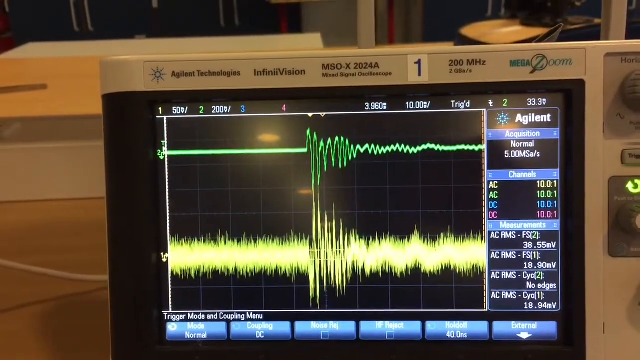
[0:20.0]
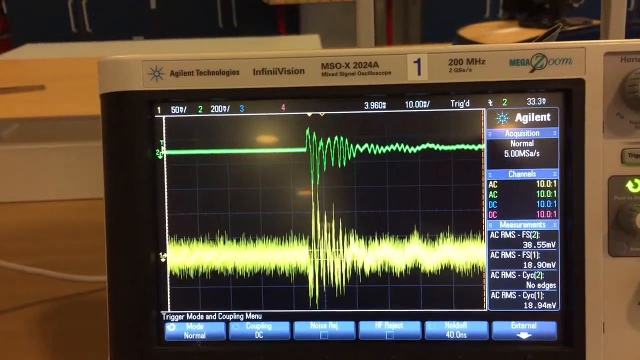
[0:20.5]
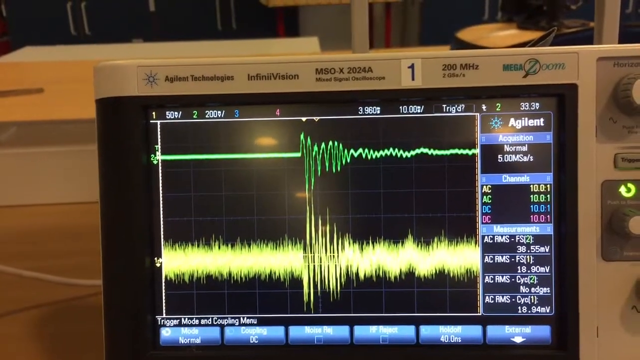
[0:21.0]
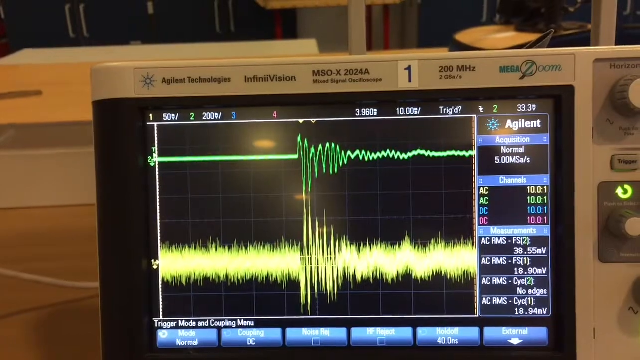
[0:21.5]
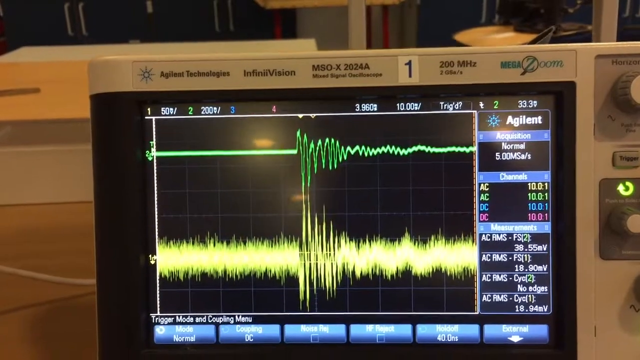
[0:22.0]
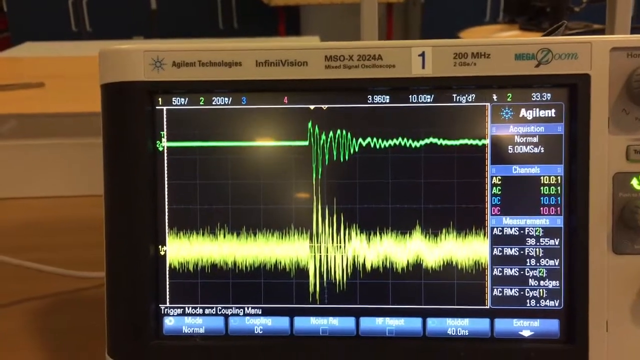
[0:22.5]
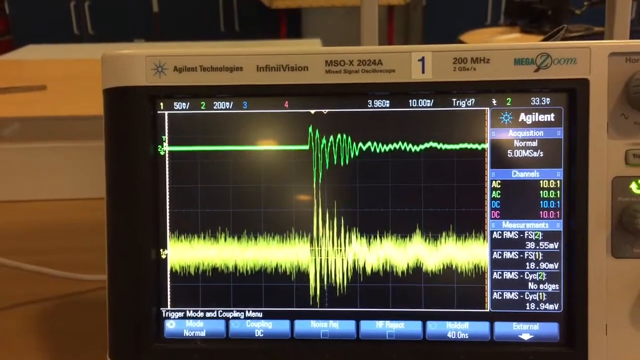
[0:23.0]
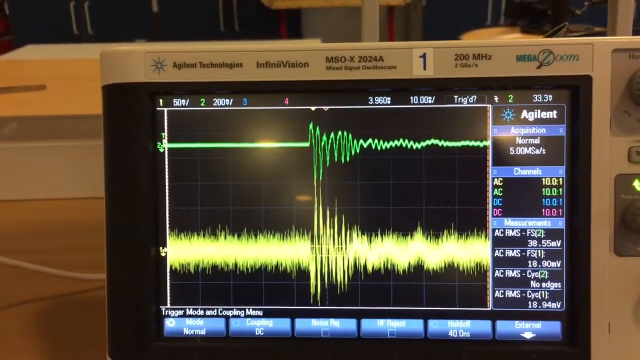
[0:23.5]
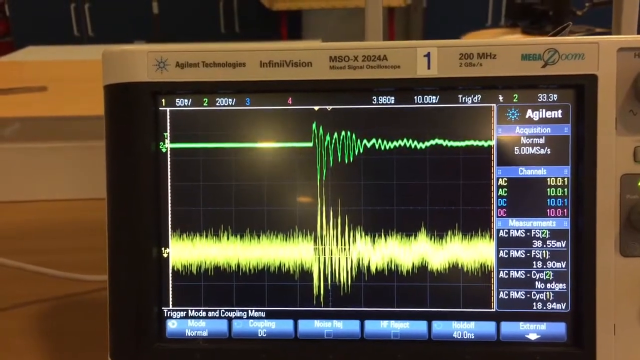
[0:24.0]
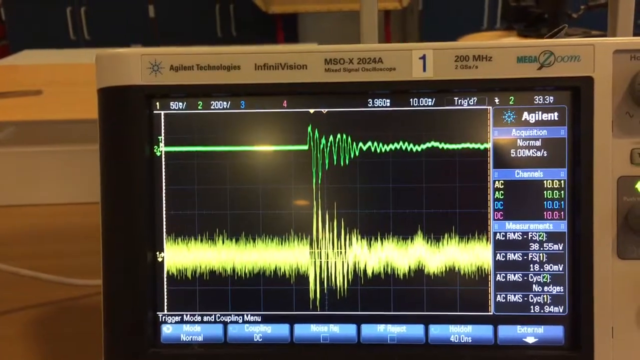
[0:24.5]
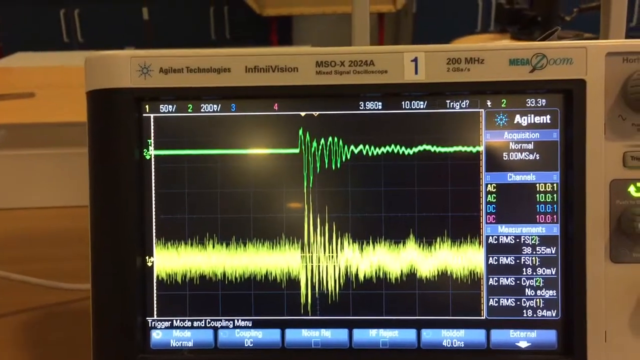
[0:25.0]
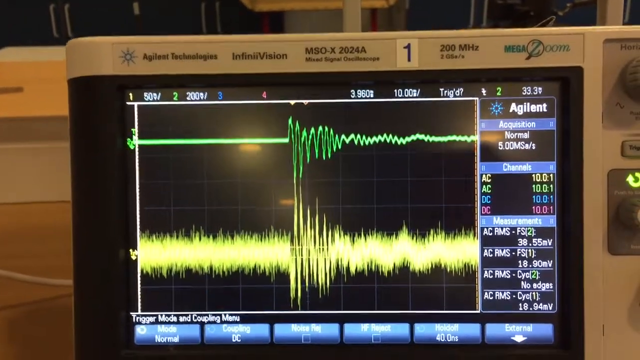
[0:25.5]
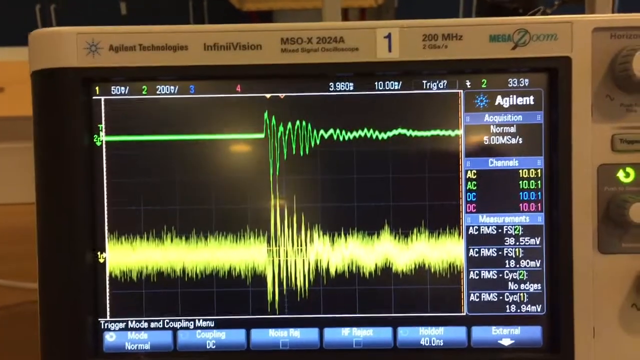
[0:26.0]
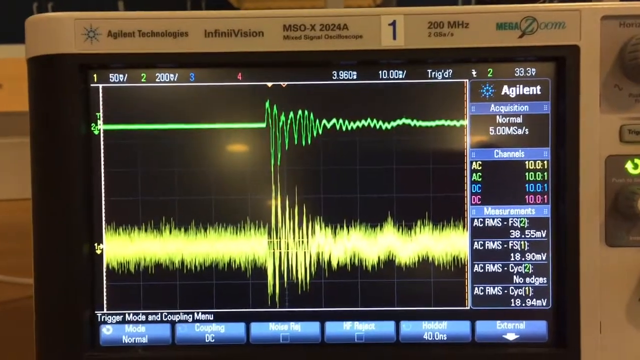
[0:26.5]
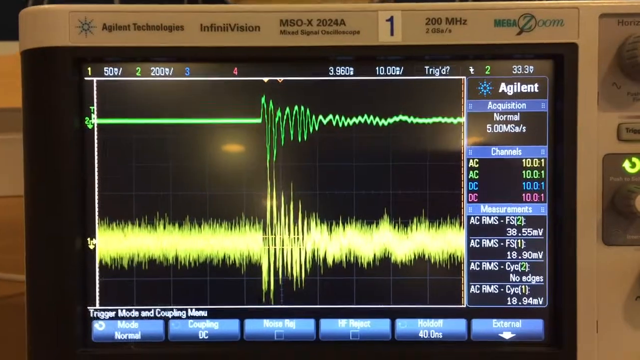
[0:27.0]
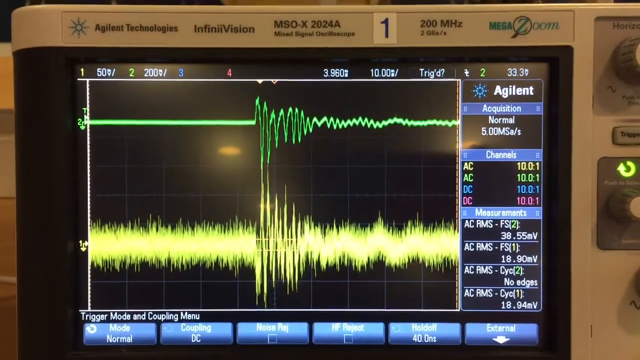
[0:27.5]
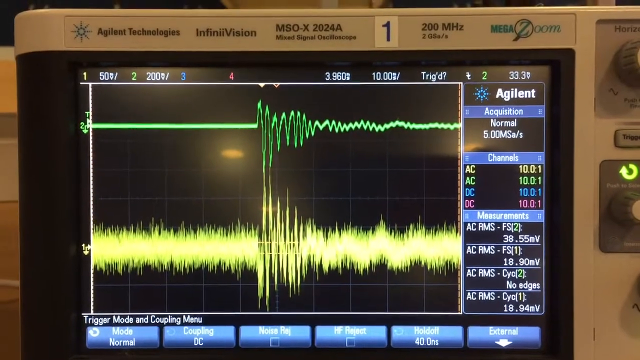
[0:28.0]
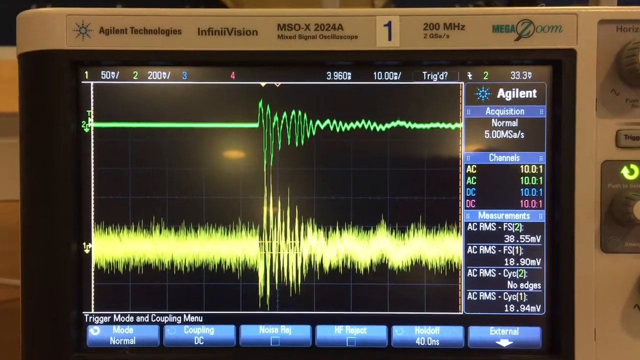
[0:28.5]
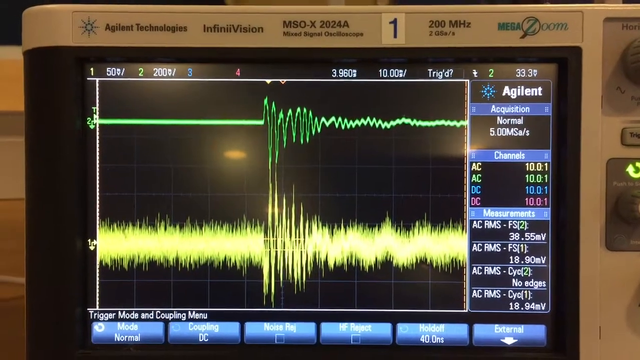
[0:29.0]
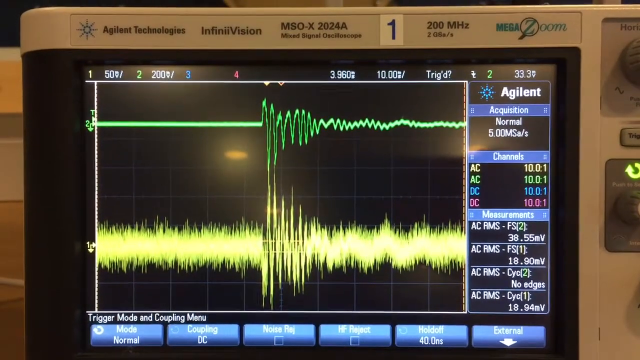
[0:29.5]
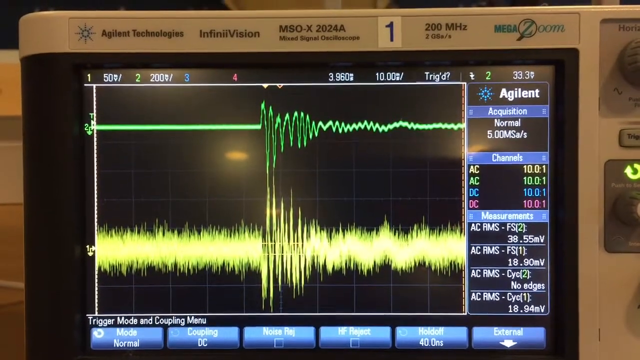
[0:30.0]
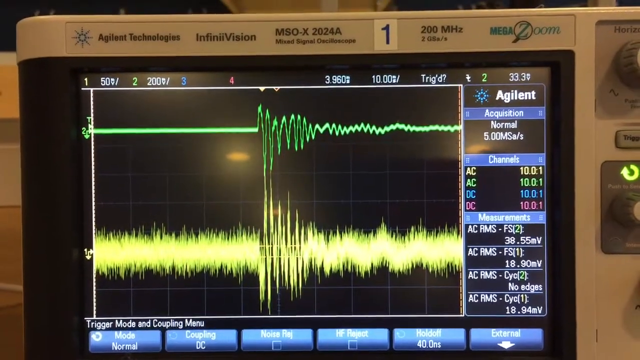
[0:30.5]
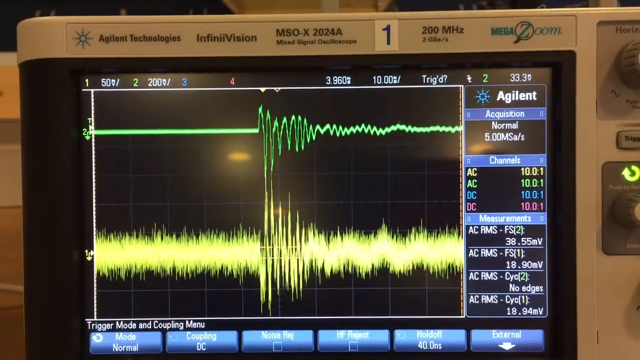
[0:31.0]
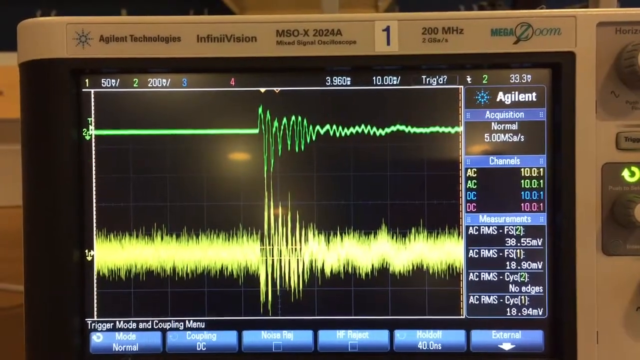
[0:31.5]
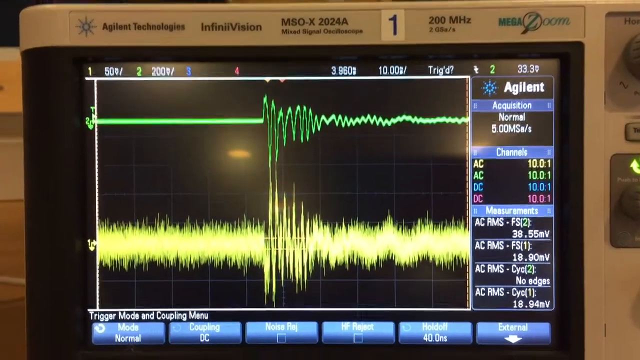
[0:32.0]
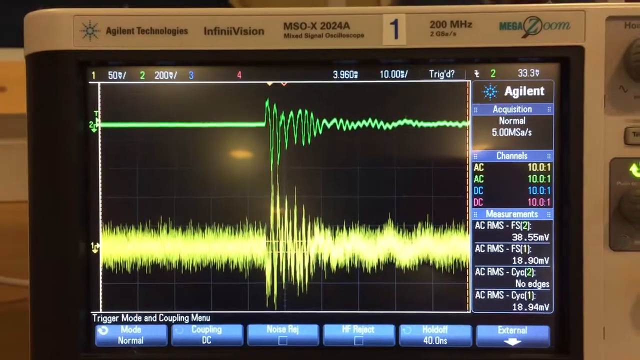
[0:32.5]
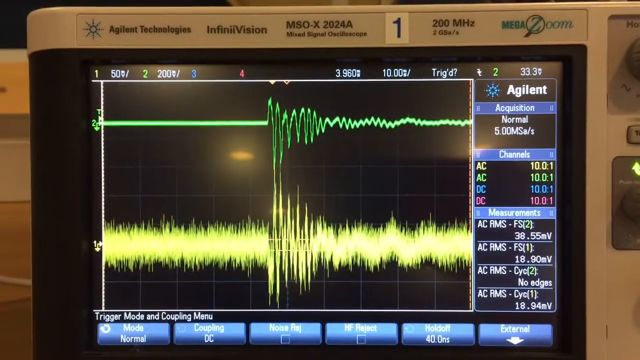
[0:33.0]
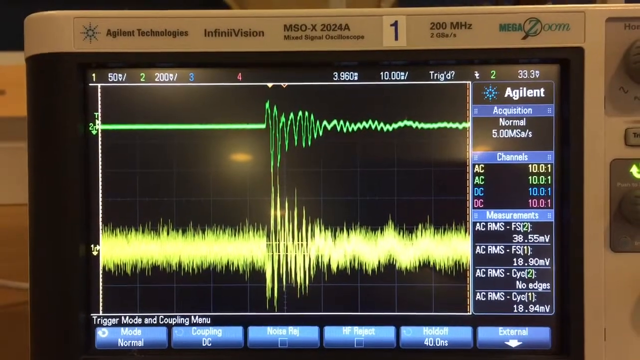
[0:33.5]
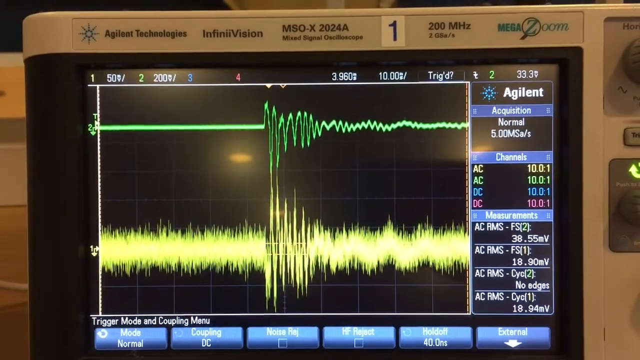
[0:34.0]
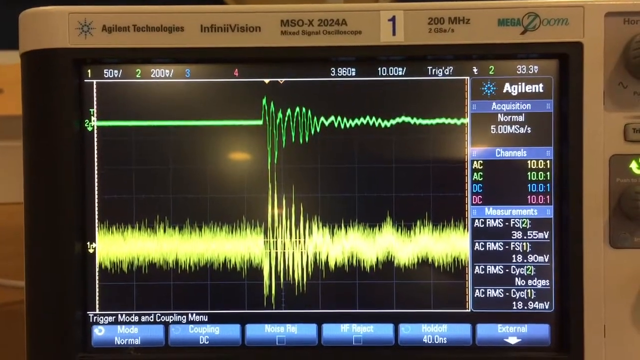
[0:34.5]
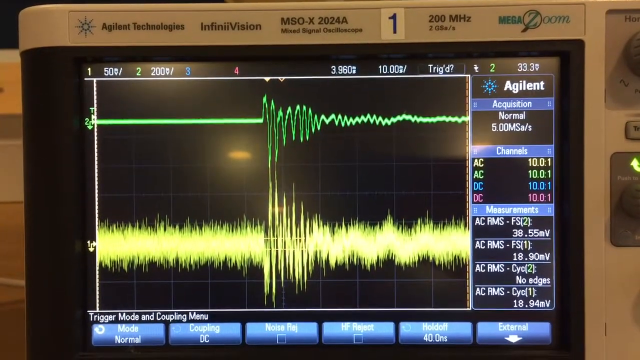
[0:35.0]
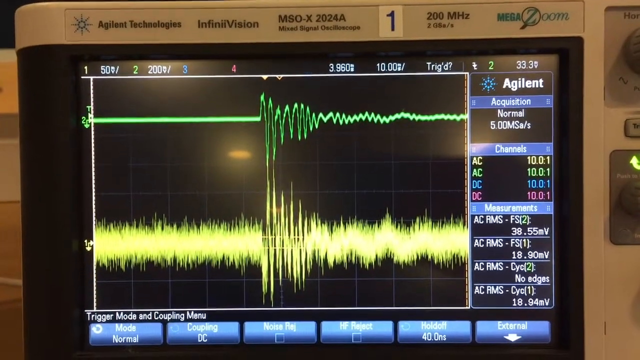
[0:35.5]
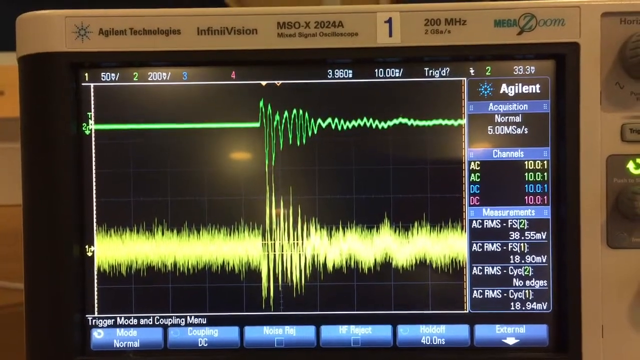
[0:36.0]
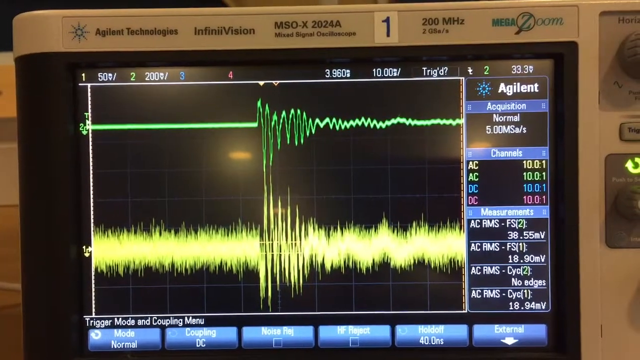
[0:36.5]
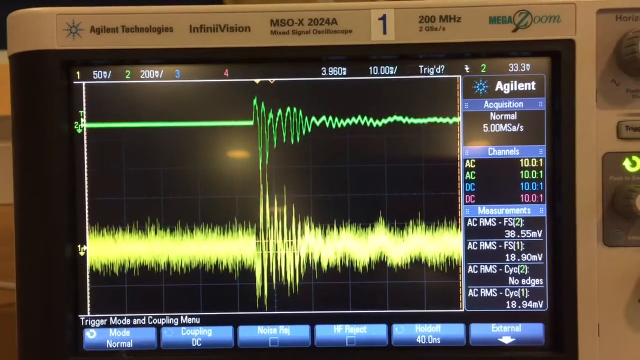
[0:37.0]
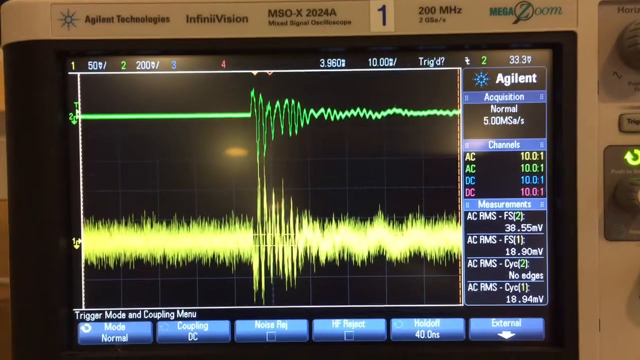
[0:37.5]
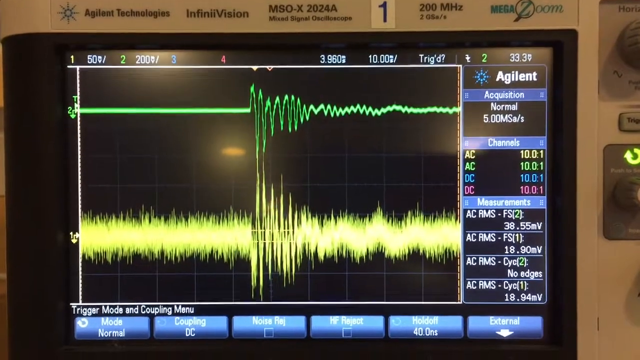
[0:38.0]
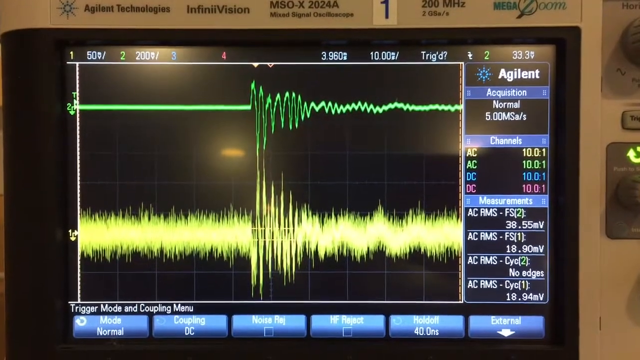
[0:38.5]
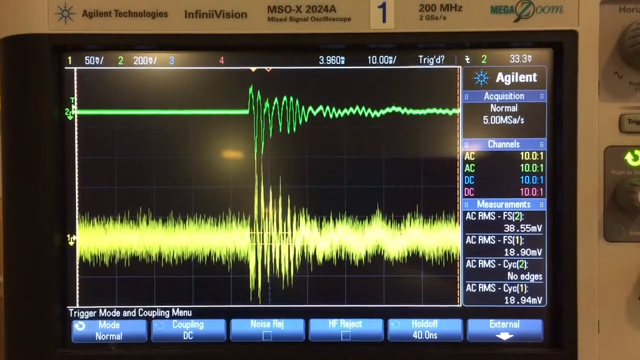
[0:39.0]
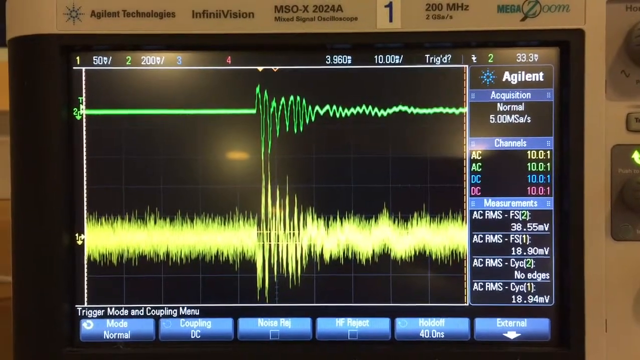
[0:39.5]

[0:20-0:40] A device made by Agilent Technologies shows its model number, "MSO-X 2024A", and an indicator for the frequency rate, "200 MHz". Controls for channels, acquisitions and measurements are visible. The device has a lot of buttons and functions, and its display shows a lot of information that appears to relate to waves and frequencies. On the screen there are two lines of waves, one at the top and one at the bottom: the top line shows a linear wave, while the bottom line is very congested. The number "1" is written at the top of the screen.